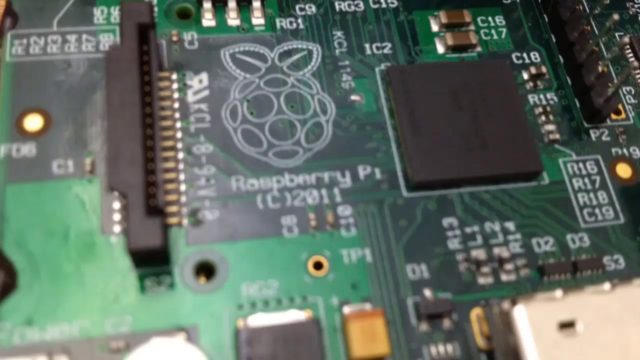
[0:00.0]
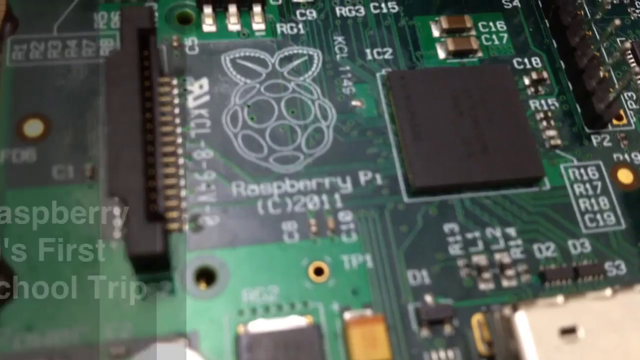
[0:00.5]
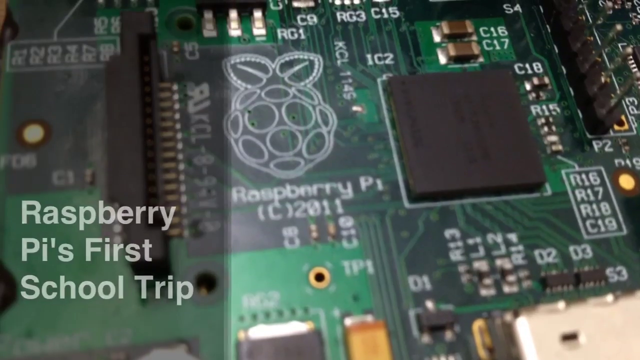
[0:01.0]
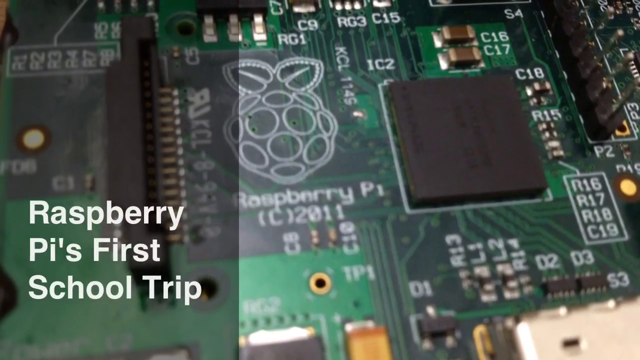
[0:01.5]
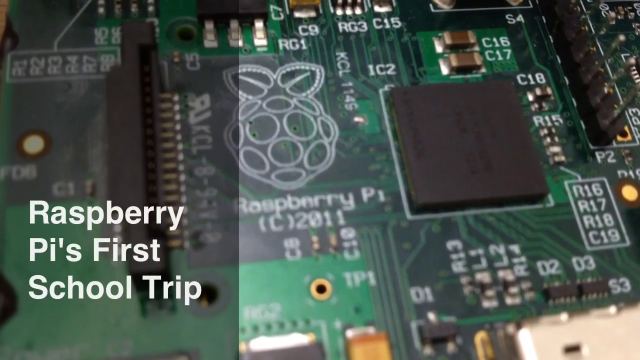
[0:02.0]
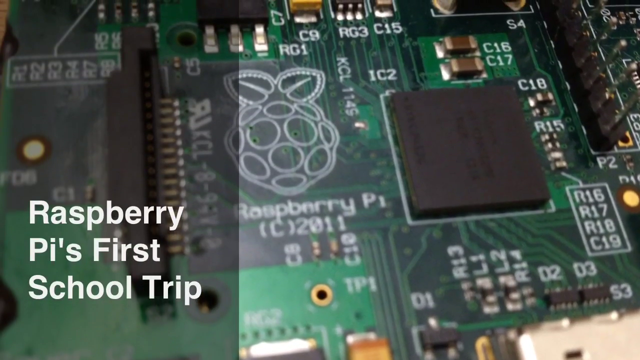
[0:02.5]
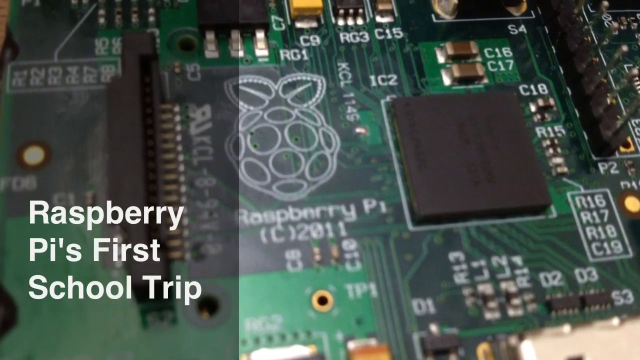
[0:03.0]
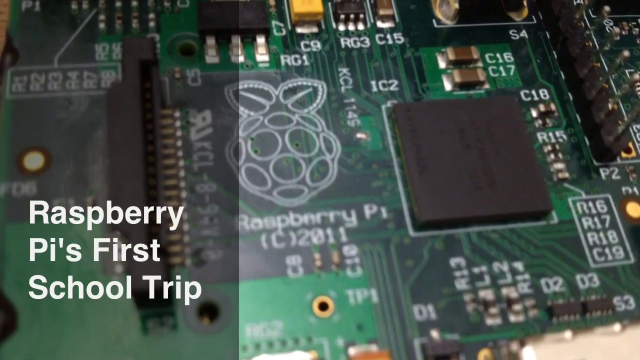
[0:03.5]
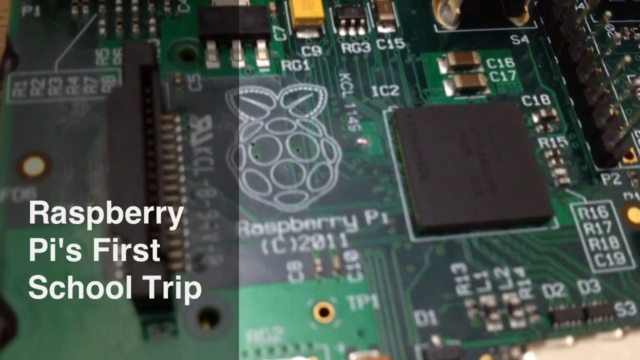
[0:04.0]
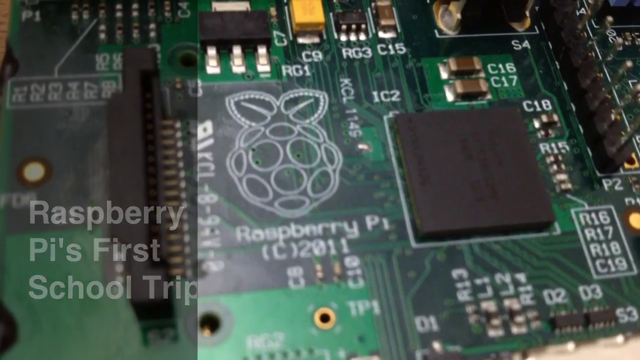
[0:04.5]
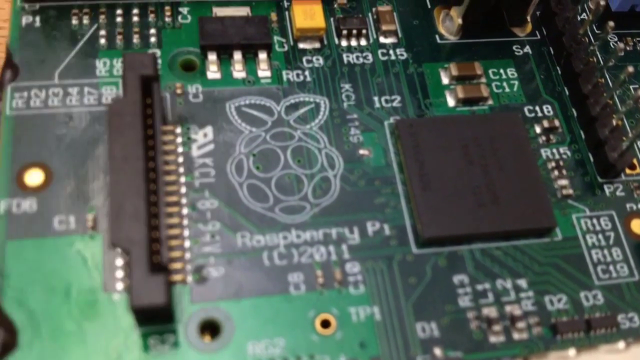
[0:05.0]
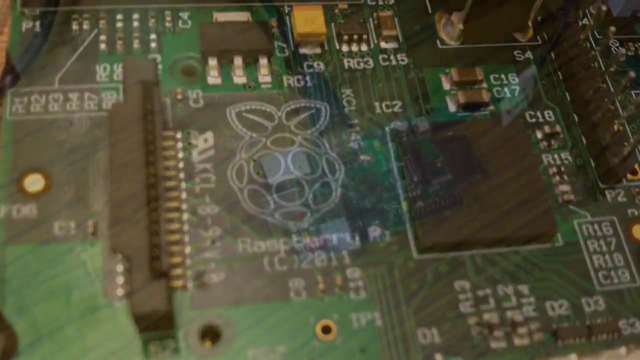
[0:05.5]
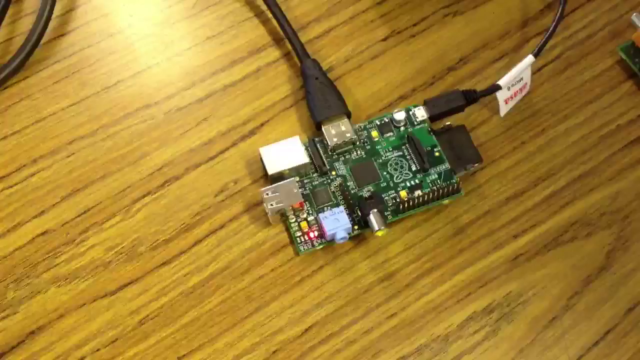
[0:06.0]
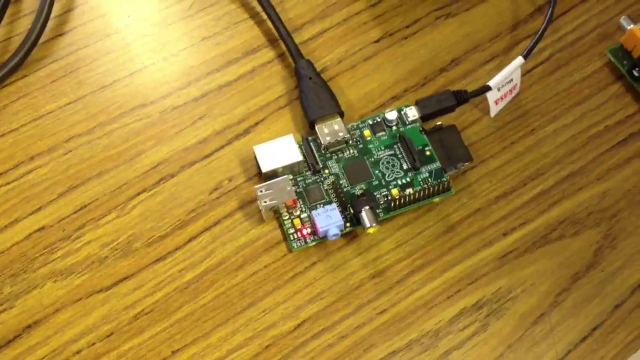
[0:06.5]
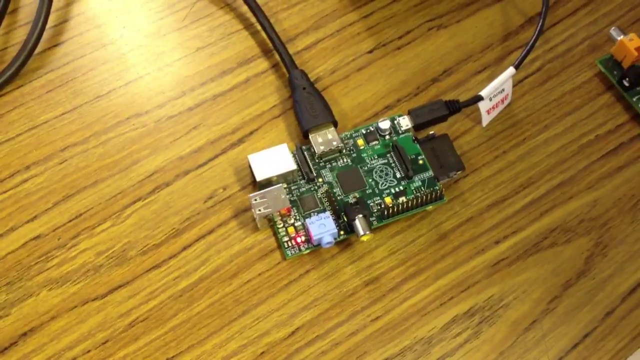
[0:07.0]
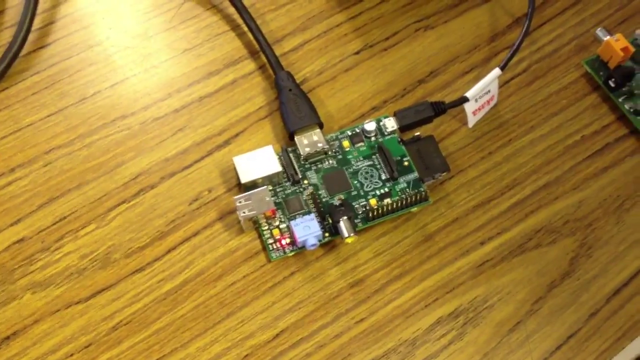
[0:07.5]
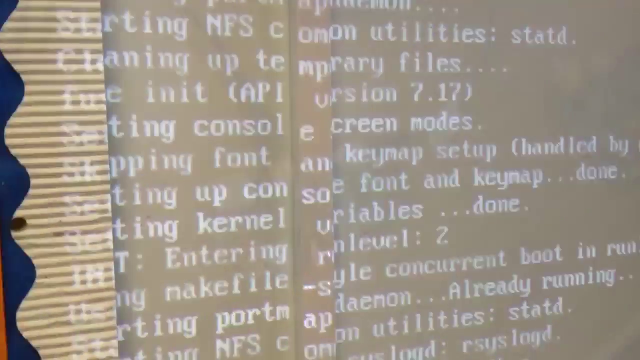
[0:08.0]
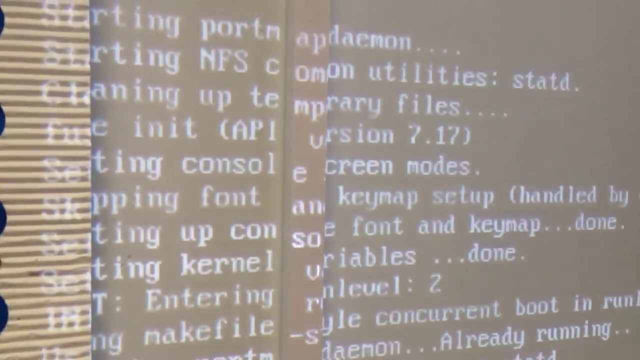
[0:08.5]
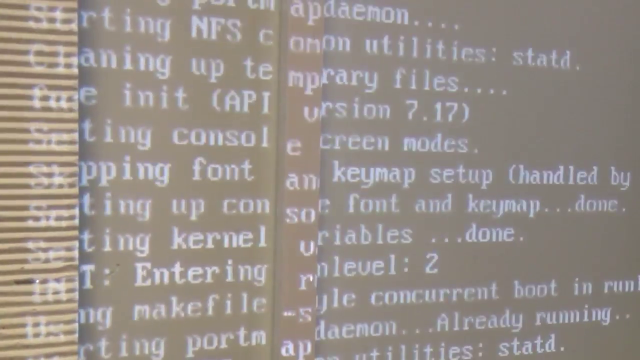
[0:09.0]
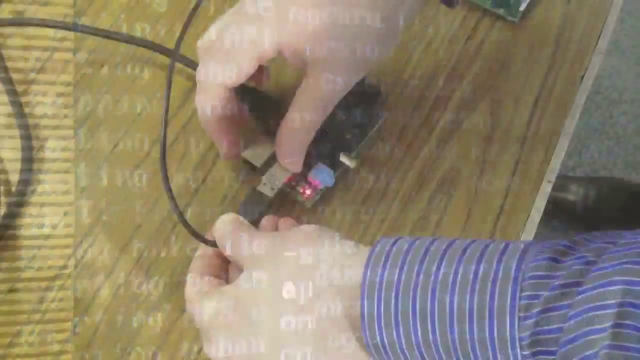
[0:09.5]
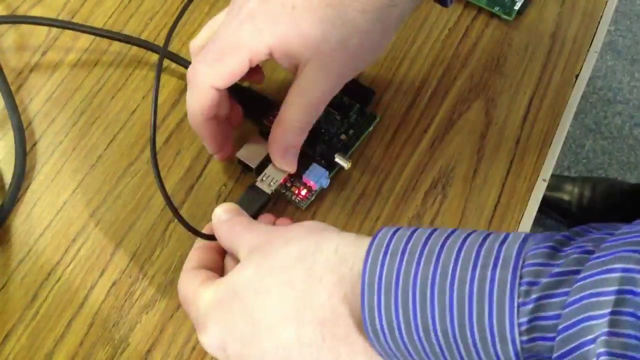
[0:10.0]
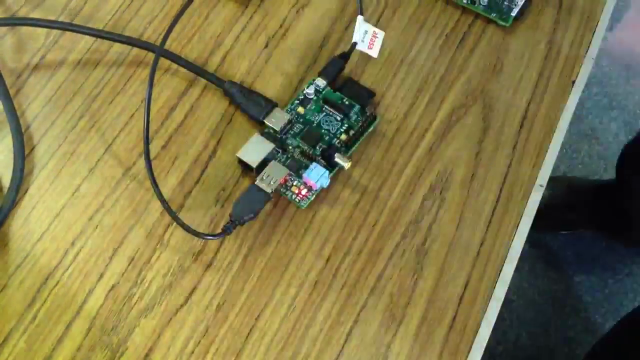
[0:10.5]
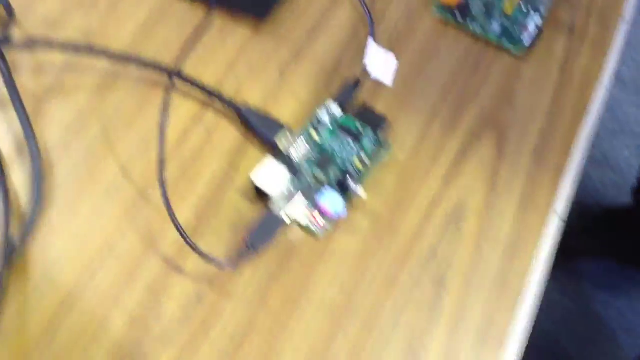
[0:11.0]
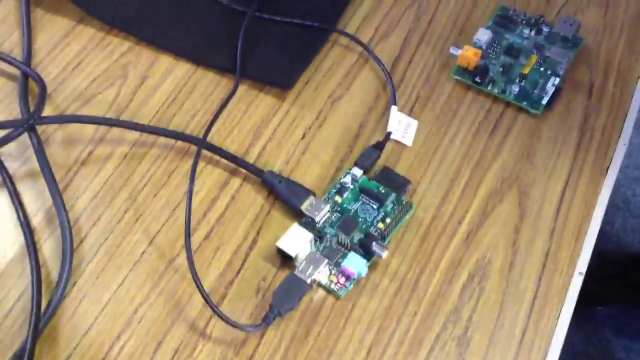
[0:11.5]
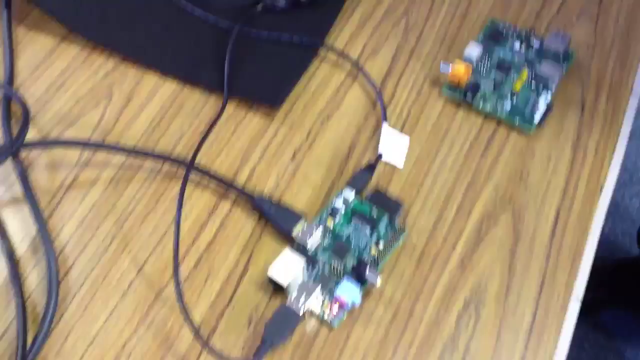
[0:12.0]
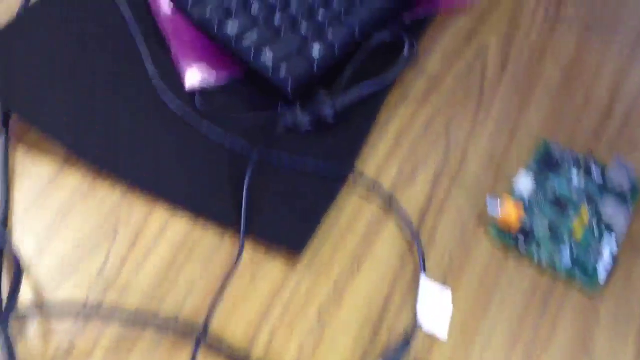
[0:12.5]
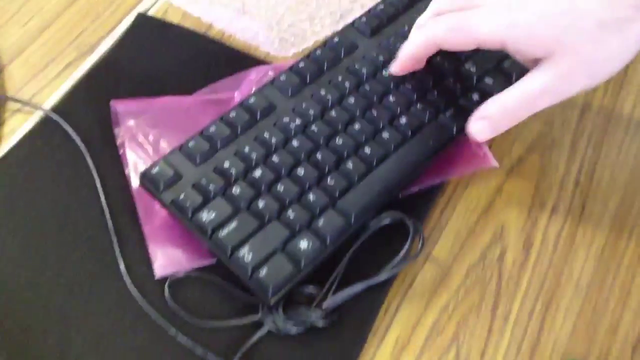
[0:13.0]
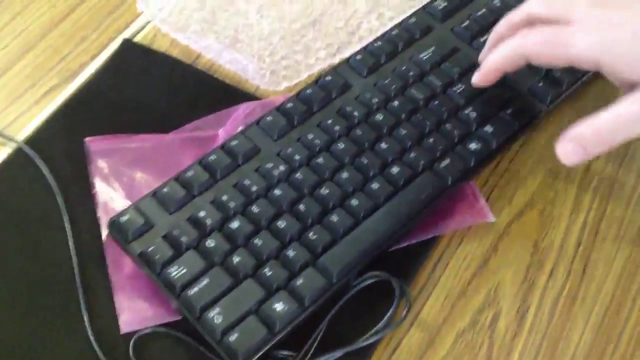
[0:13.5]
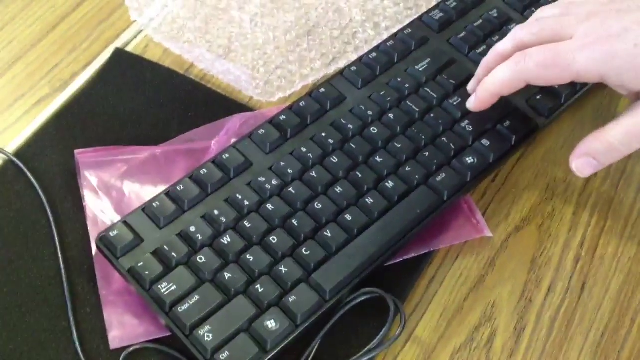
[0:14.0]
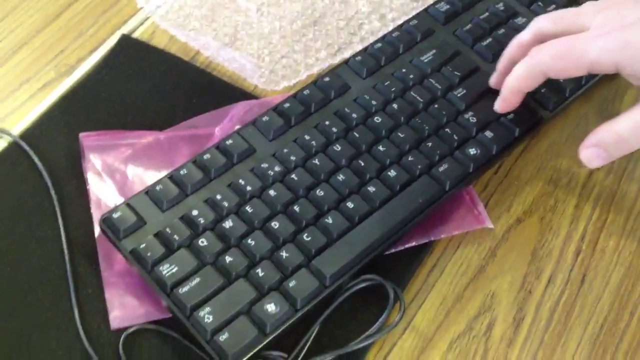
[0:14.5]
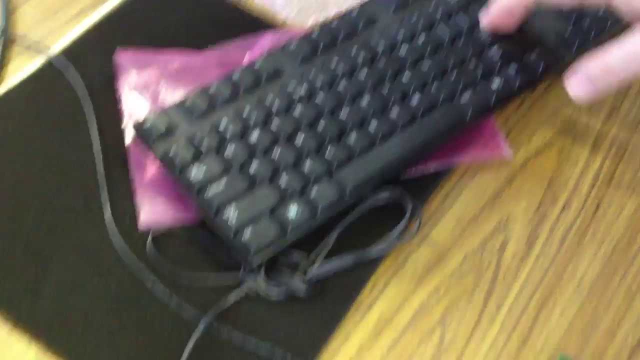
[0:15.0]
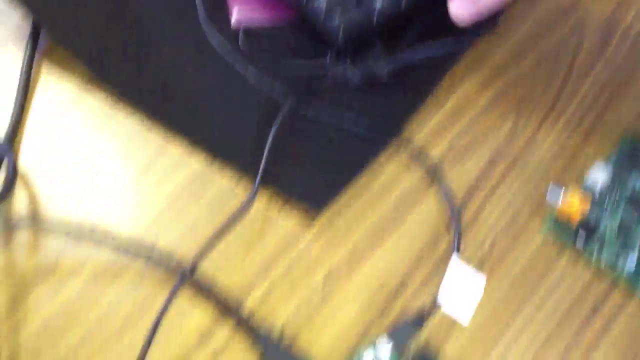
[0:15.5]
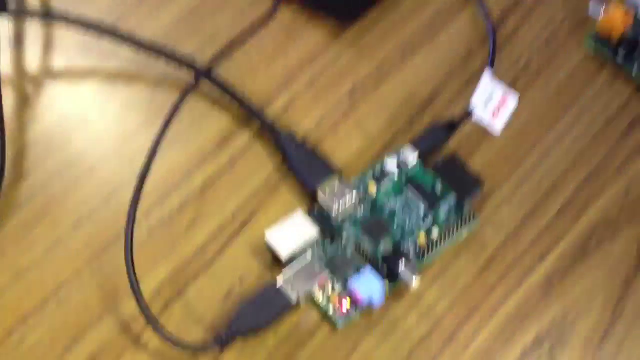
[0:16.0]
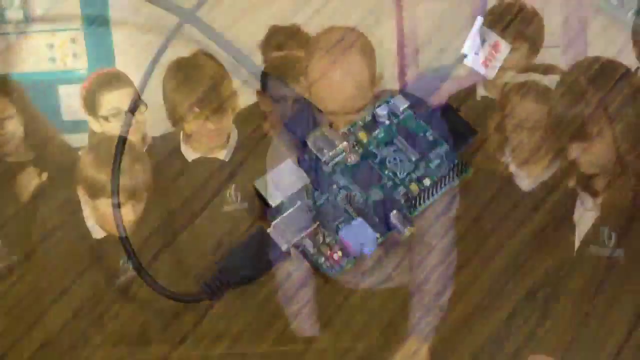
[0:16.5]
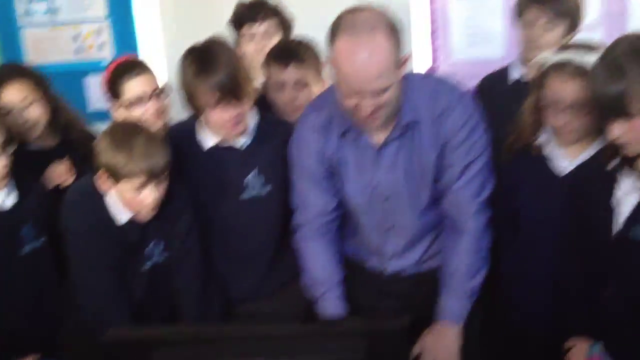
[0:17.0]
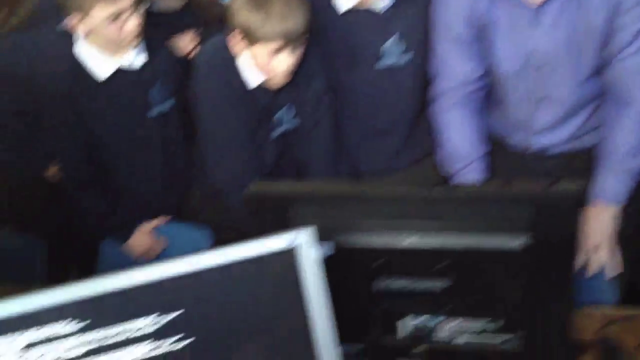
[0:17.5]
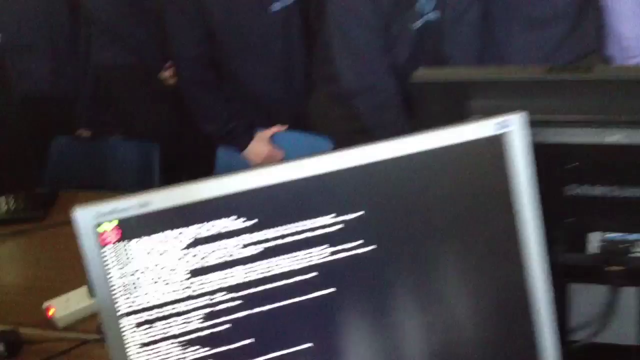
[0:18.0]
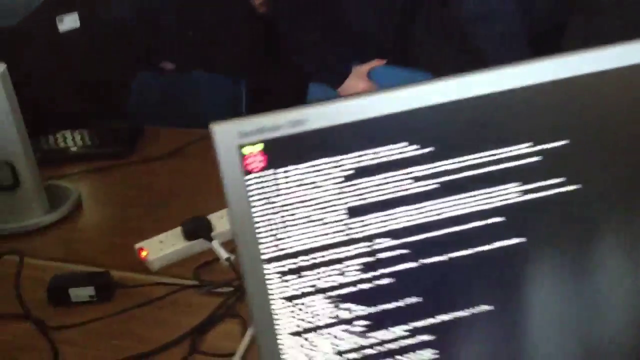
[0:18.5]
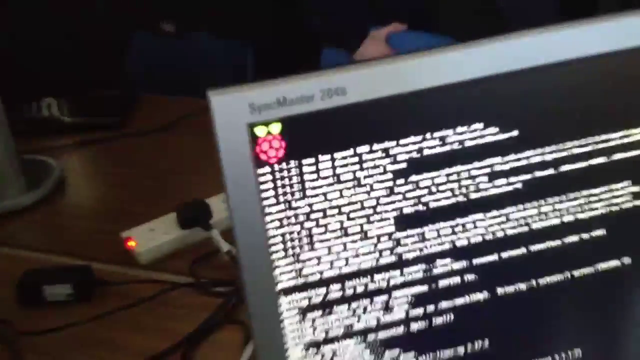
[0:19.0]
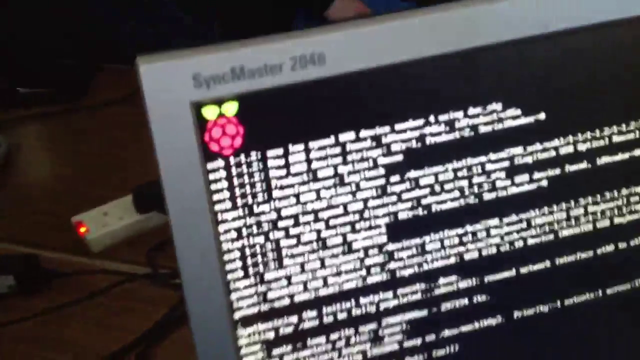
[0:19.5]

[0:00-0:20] A close-up shows a circuit board on the right side; a black shadow comes in and a caption reads "Raspberry Pi's first school trip." The circuit board has black plastic squares, writing, silver grooved lines, and a lot of little silver button-like electronics. A zoomed-out view shows the circuit with different cords attached to it; it is probably about two by three. Next, a computer screen displays directions or coding. A man's hand inserts a USB into the circuit; two USBs are connected, and a third wire is connected on the right side. Another circuit board is laying on the desk to the right. The camera zooms up to a black keyboard, where fingers type on the keys and on the numerical keypad, then hovers back down over the circuit board. The video cuts to a classroom, where a teacher is hunched over in front of a computer, surrounded on each side by students in navy sweaters. The camera hovers down and zooms in on a computer screen, which has a little ladybug-like graphic in the upper left corner.